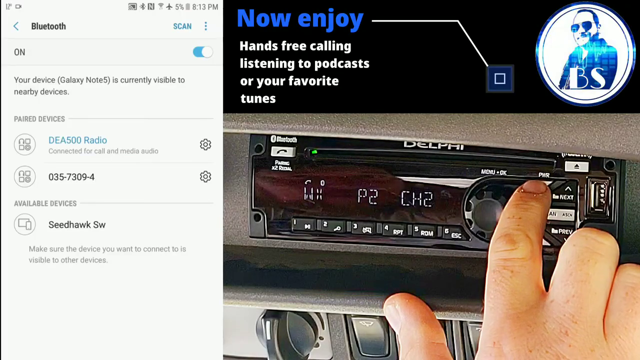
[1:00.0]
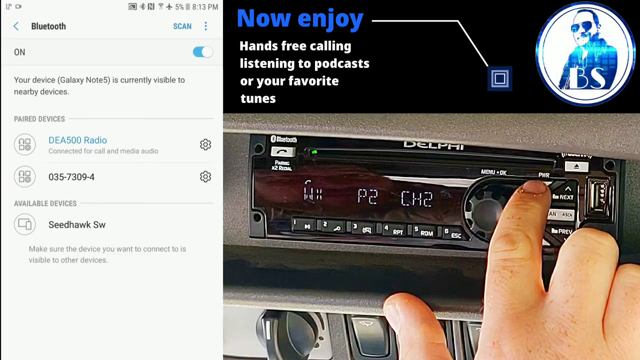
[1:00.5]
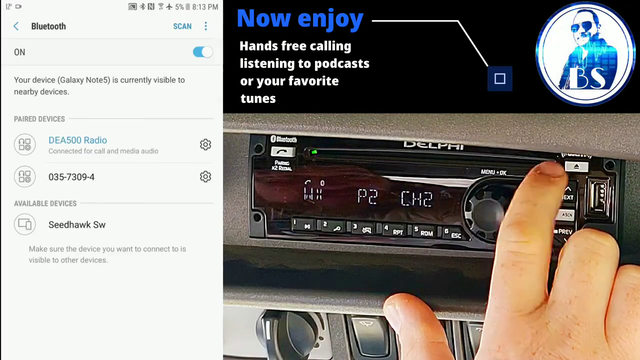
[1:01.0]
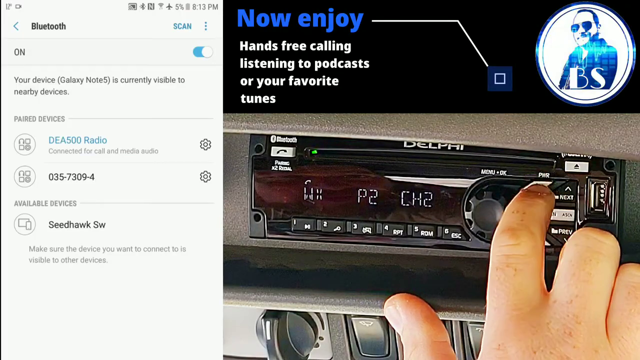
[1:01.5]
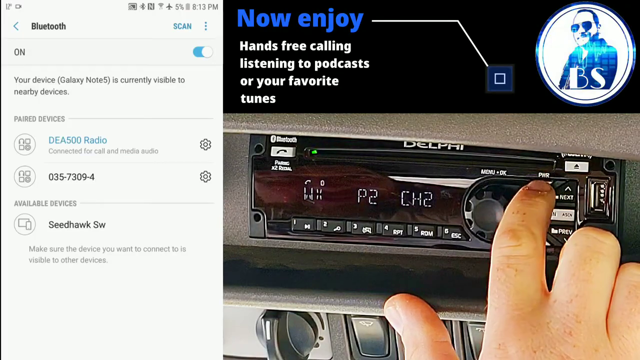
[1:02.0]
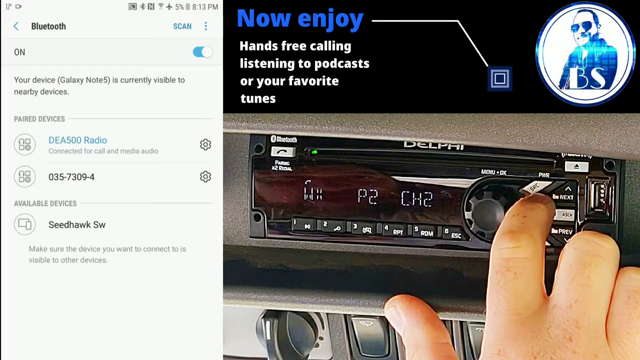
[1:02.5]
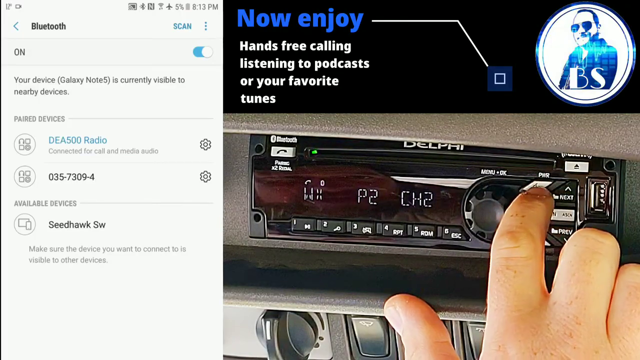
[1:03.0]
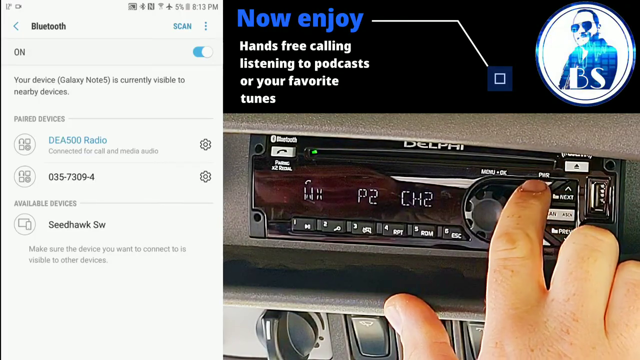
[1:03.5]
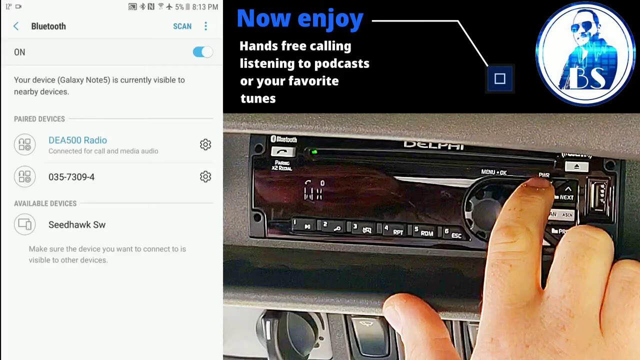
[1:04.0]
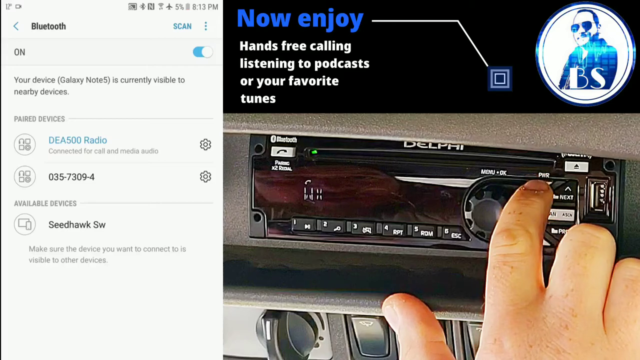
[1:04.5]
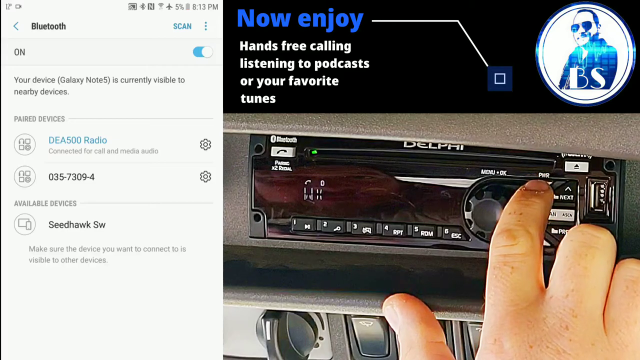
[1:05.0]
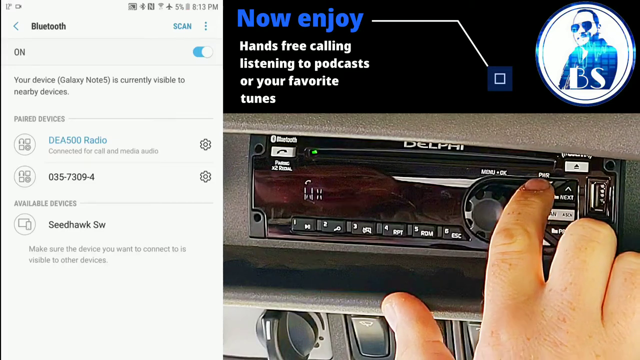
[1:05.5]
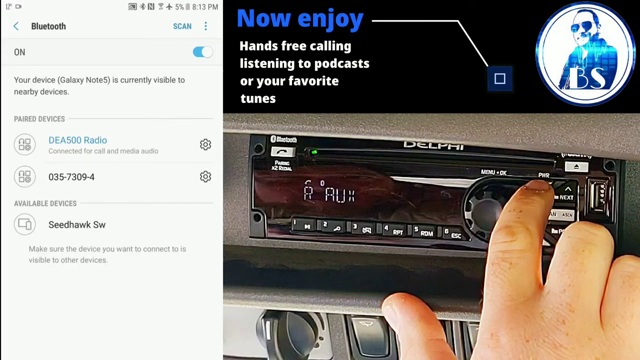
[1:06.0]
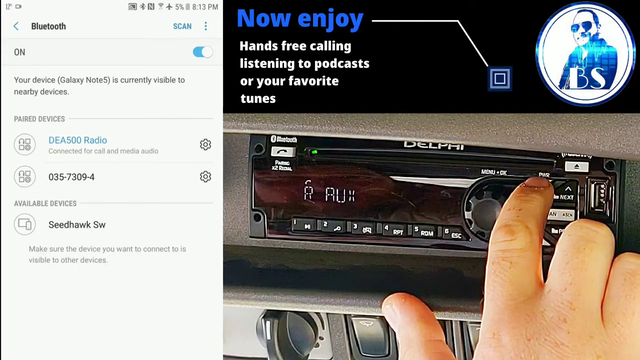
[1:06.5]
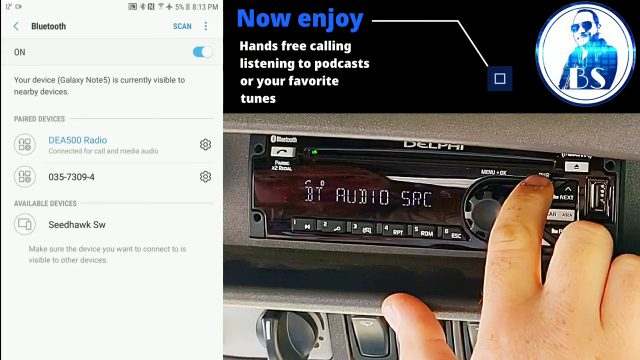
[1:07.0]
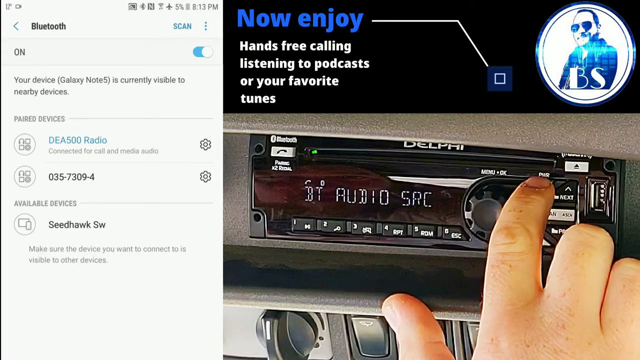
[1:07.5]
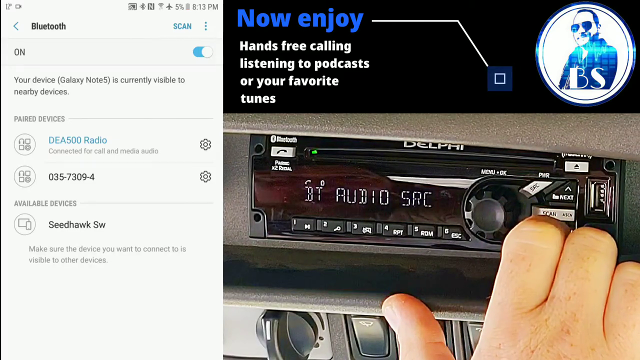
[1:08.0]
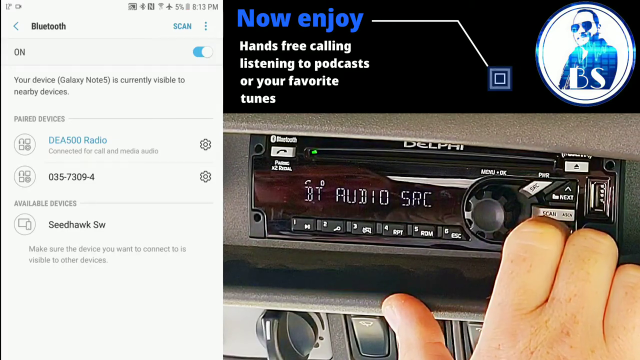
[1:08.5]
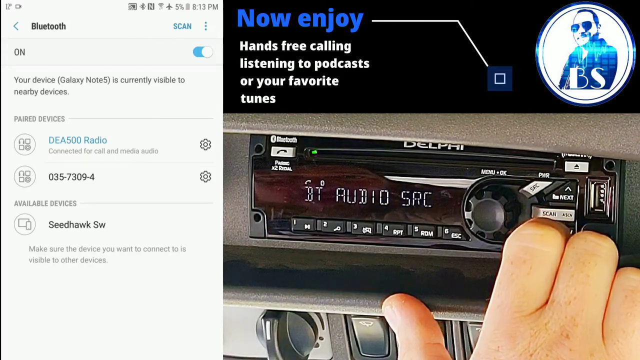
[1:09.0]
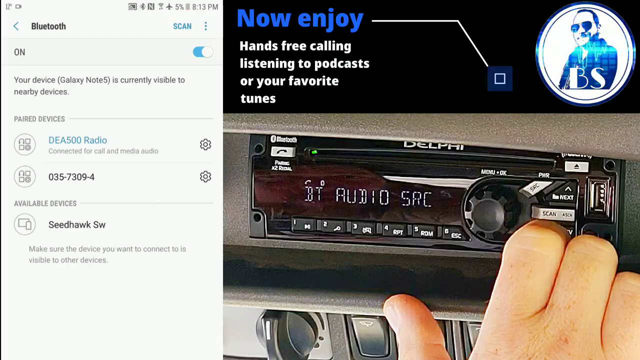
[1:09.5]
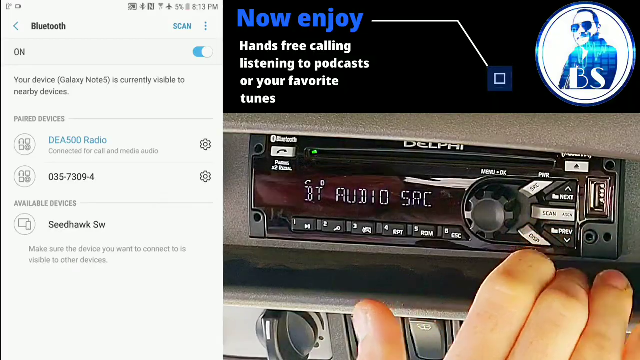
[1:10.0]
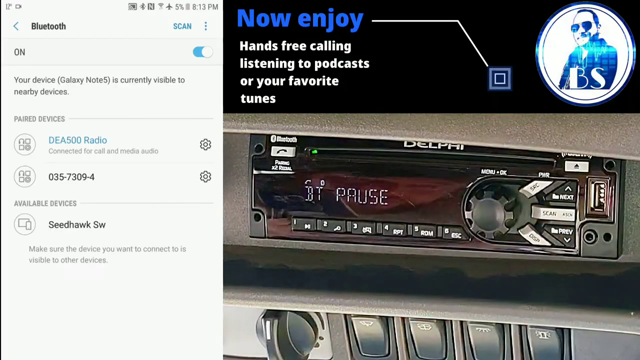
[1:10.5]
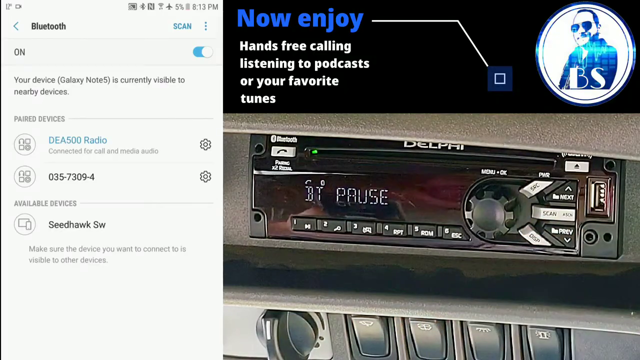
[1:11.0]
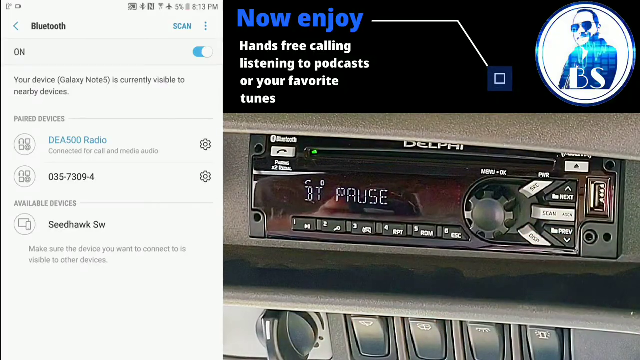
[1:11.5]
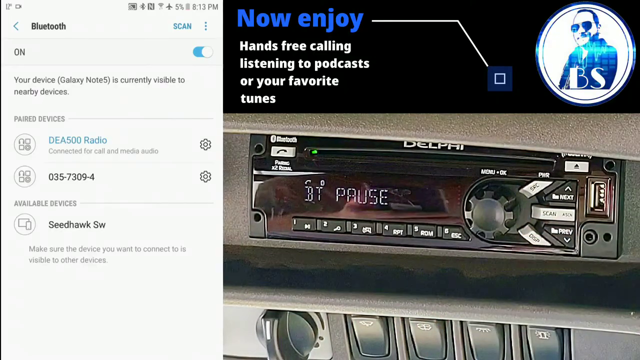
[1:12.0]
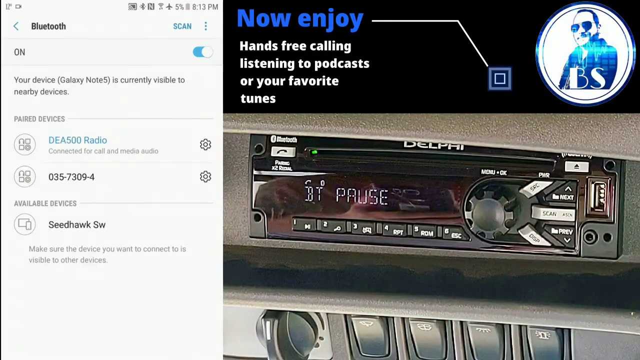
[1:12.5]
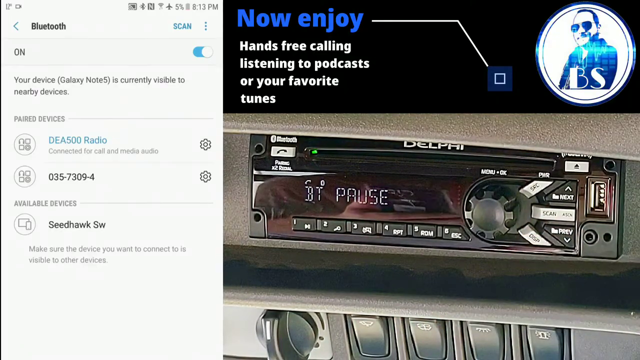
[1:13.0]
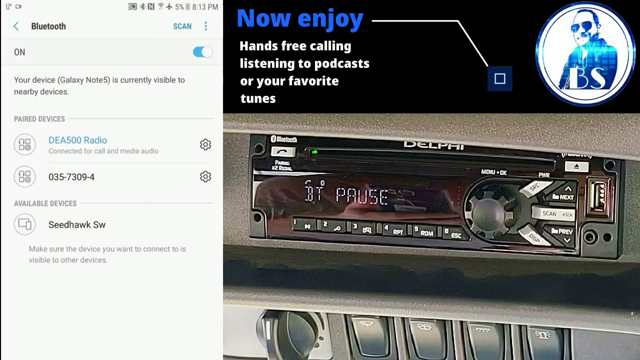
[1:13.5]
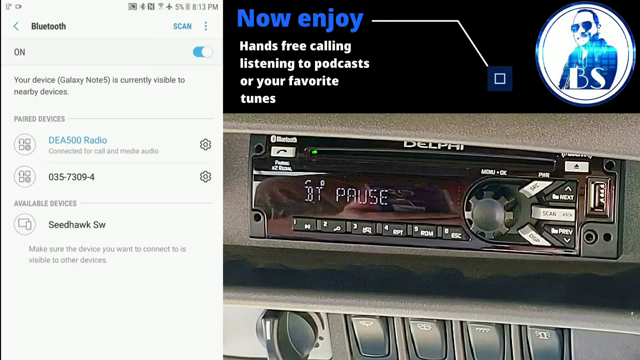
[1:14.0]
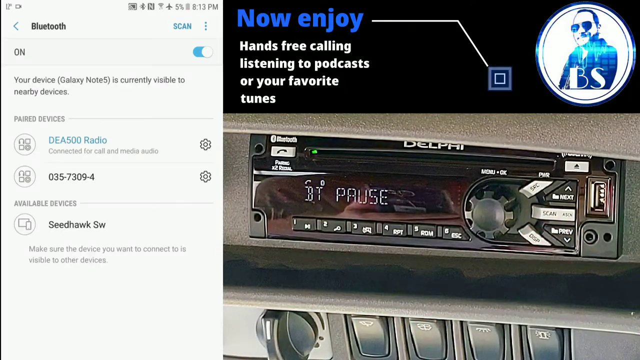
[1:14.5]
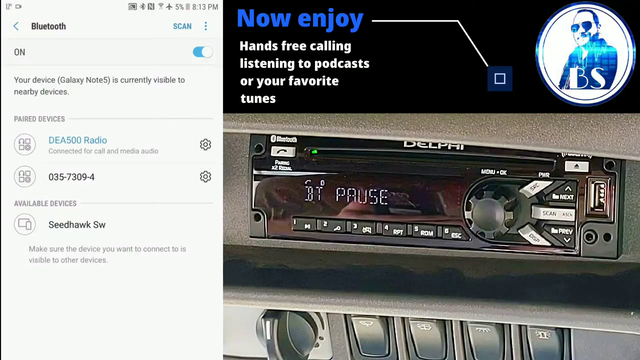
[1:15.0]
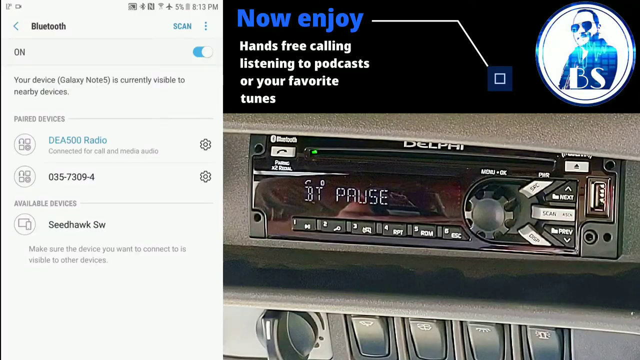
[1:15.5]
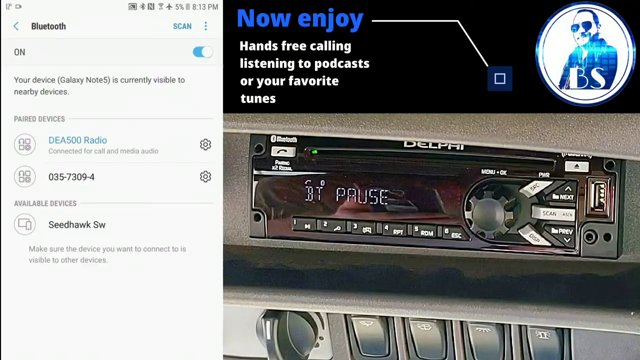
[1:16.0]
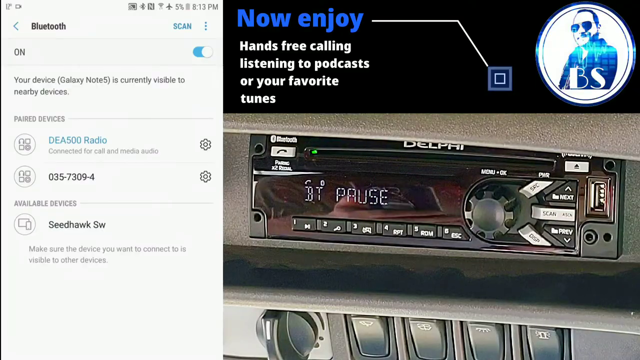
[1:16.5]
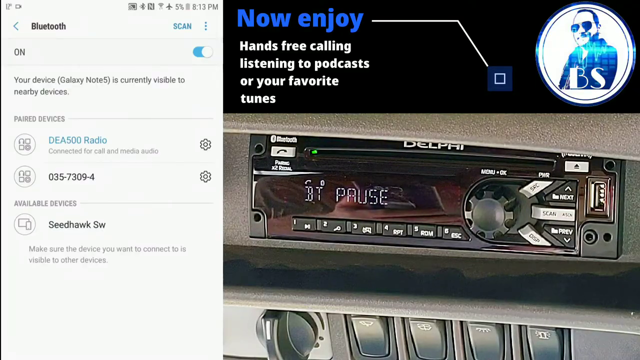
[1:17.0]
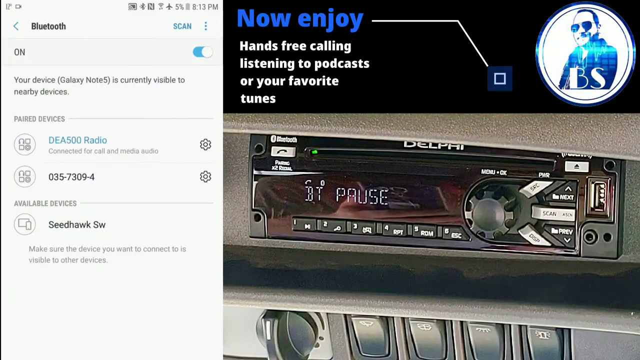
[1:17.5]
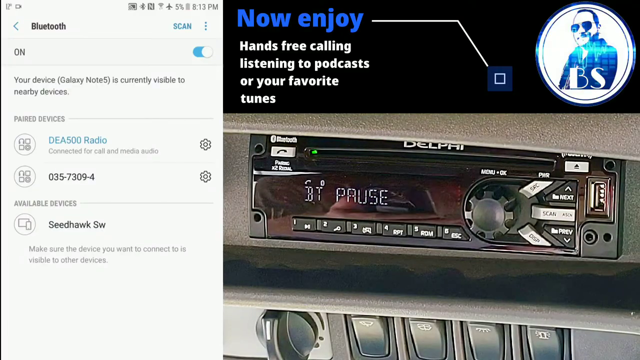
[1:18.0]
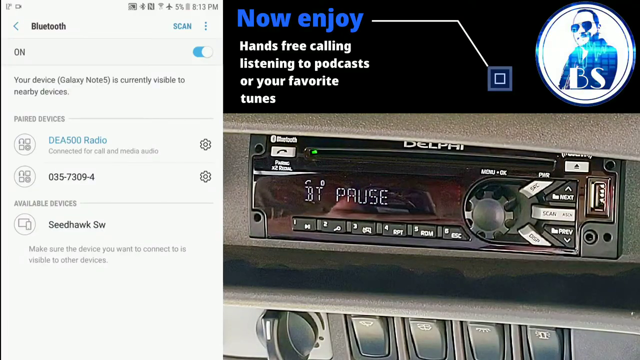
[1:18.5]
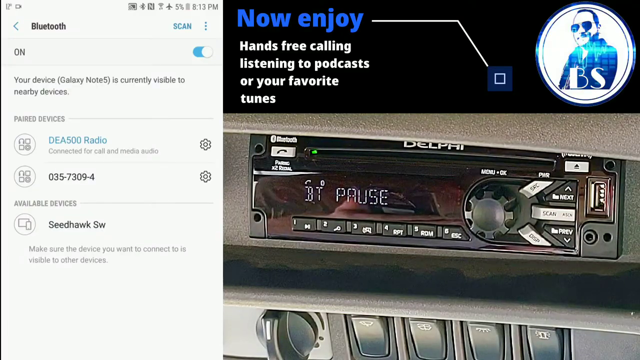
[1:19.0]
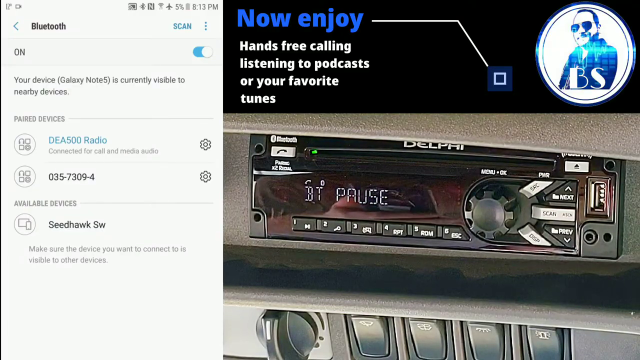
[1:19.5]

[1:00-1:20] The split screen shows a shared phone screen alongside a zoomed-in video of a car radio as the person moves through its functions to pair and use Bluetooth from the phone. On the phone side, a Bluetooth menu is open. On the other two-thirds, a finger pushes buttons and knobs on the car radio, under a banner across the top reading "now enjoy hands-free calling, listening to podcasts, or your favorite tunes". The person pushes the button labeled "SRC" twice, then a third time, and the radio panel shows "BT audio SRC", then "BT pause". The button is pushed four times in total, after which nothing more is done on the radio, and the person goes through a few different options on their phone.